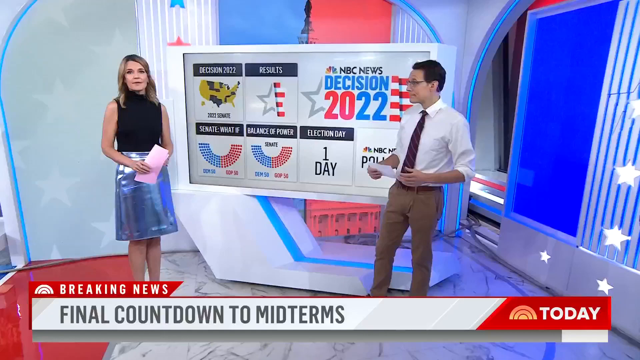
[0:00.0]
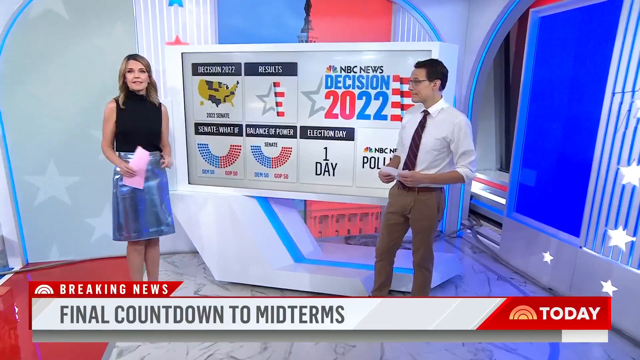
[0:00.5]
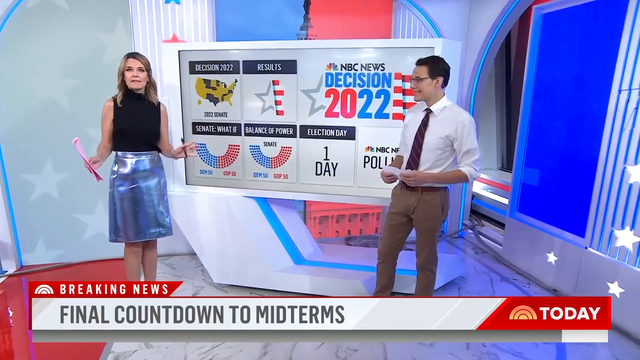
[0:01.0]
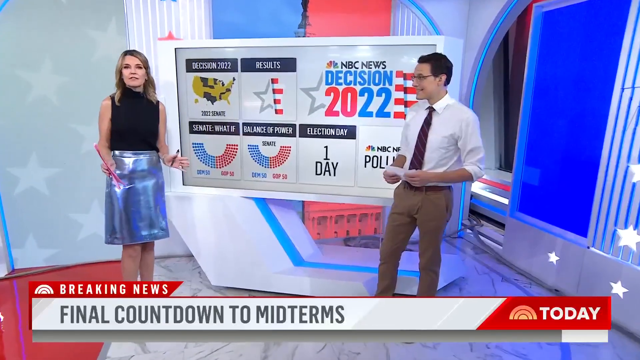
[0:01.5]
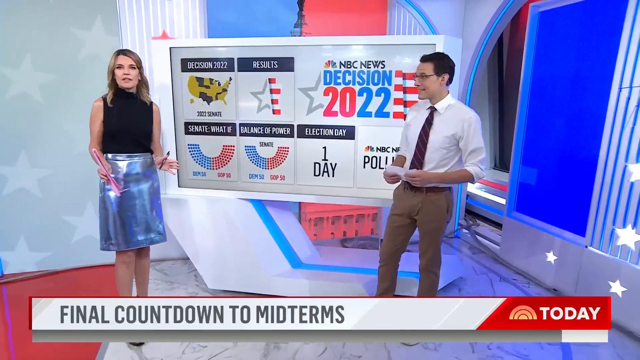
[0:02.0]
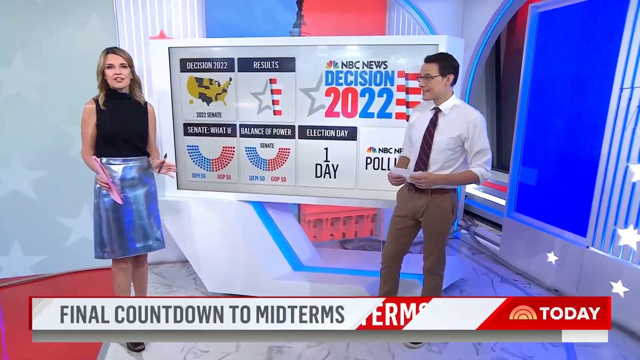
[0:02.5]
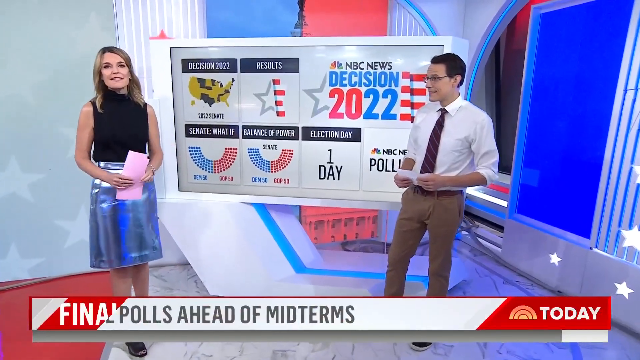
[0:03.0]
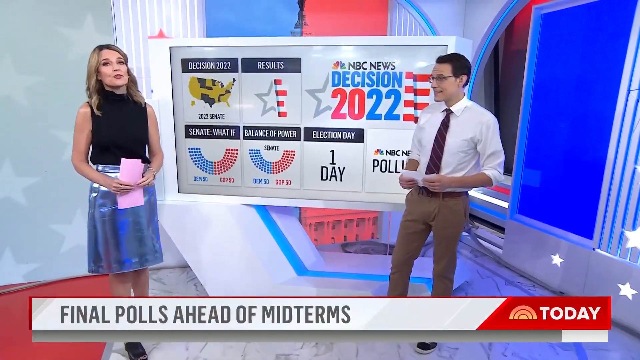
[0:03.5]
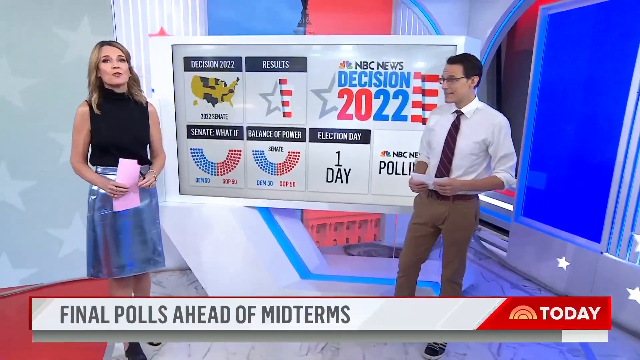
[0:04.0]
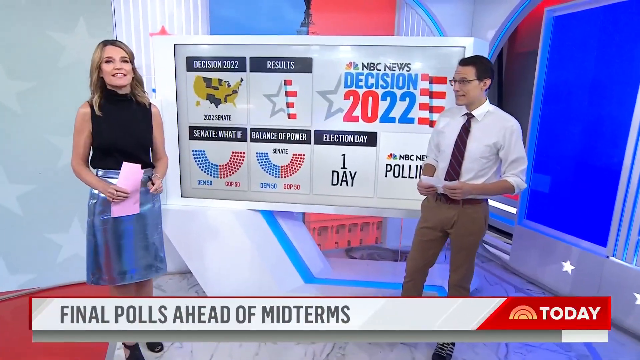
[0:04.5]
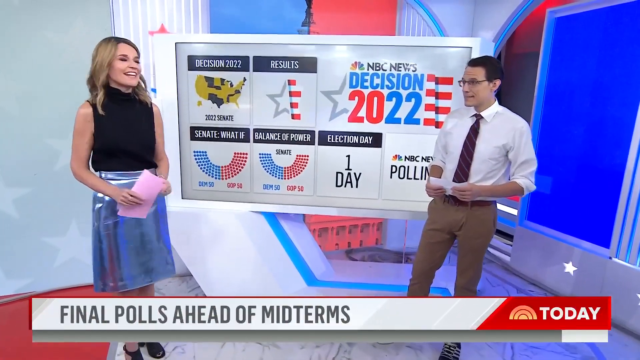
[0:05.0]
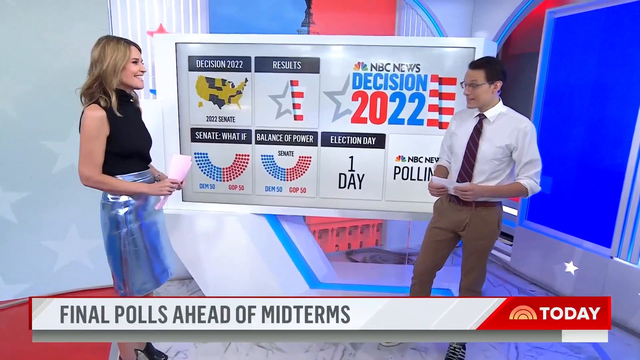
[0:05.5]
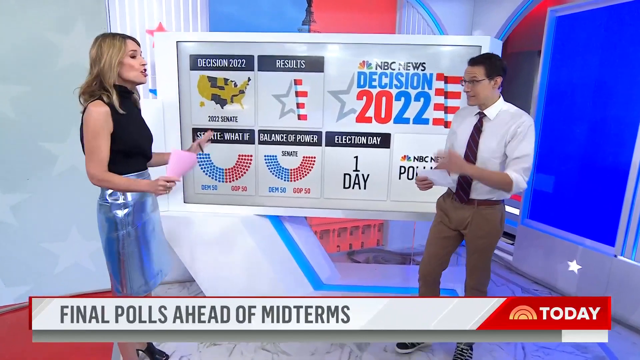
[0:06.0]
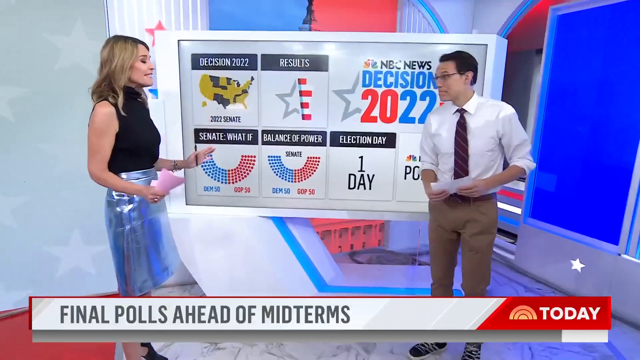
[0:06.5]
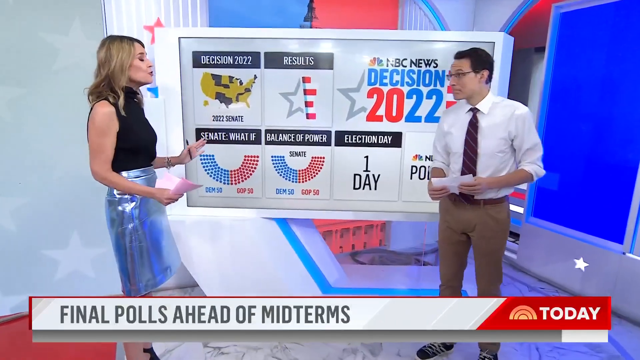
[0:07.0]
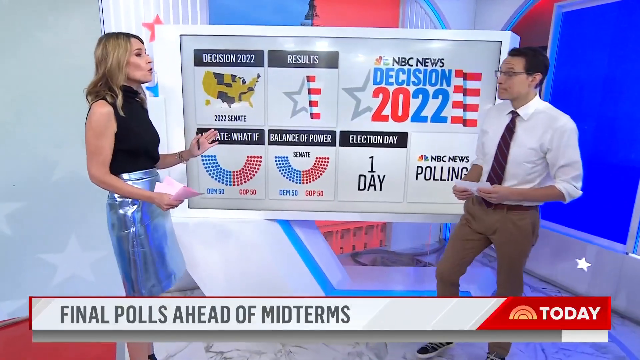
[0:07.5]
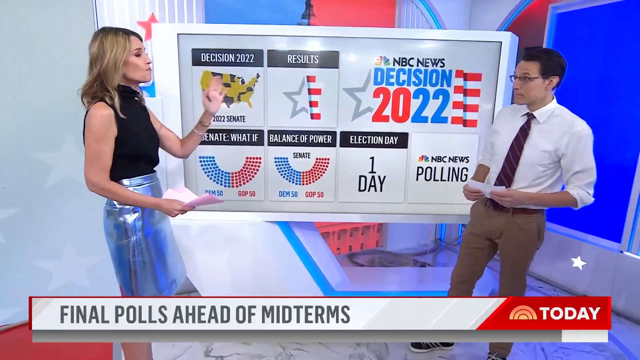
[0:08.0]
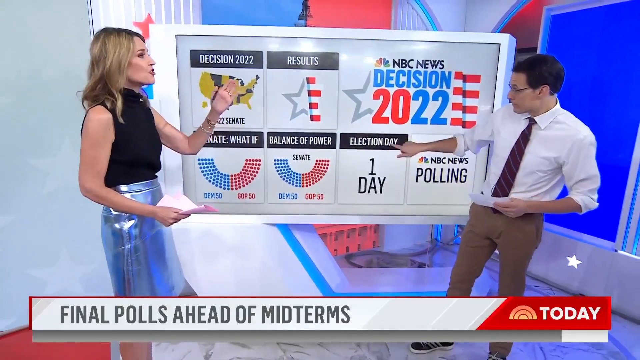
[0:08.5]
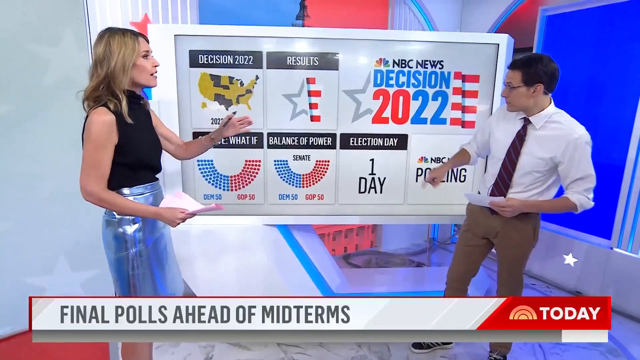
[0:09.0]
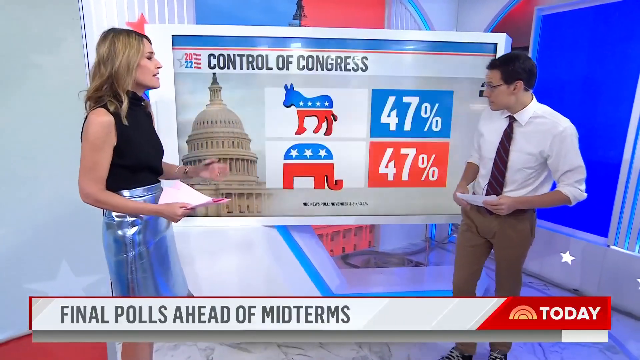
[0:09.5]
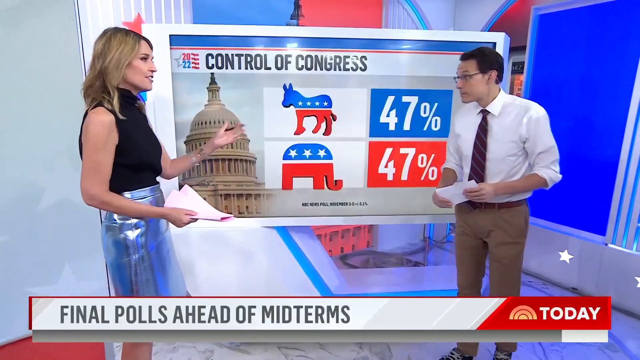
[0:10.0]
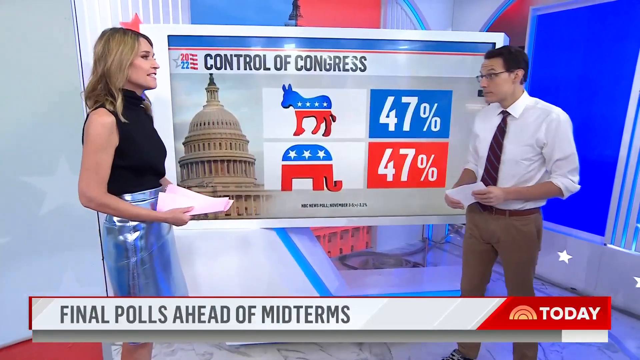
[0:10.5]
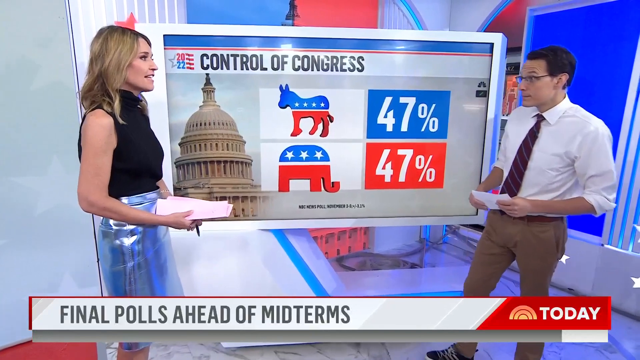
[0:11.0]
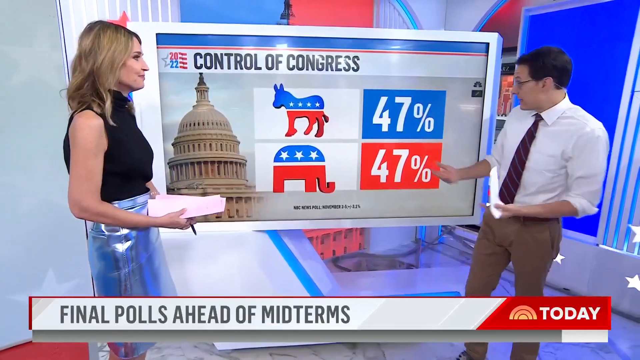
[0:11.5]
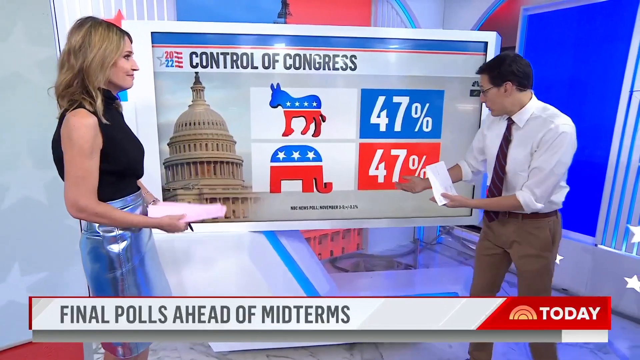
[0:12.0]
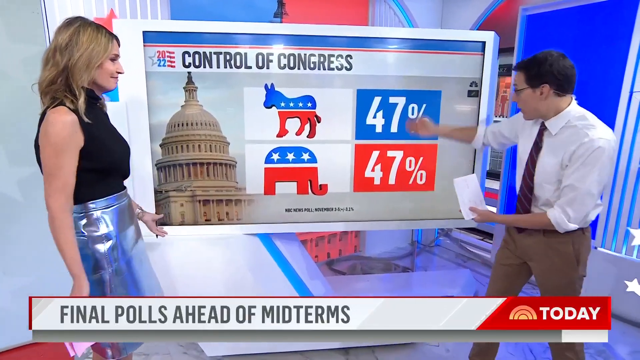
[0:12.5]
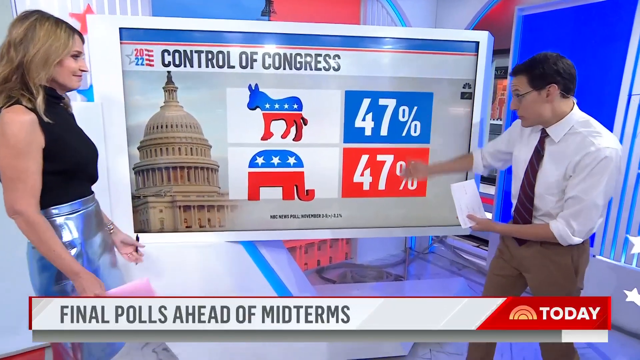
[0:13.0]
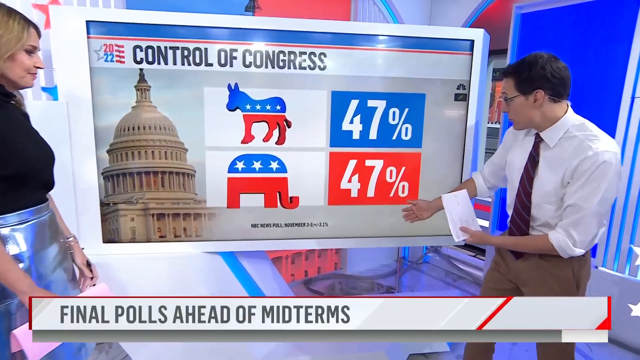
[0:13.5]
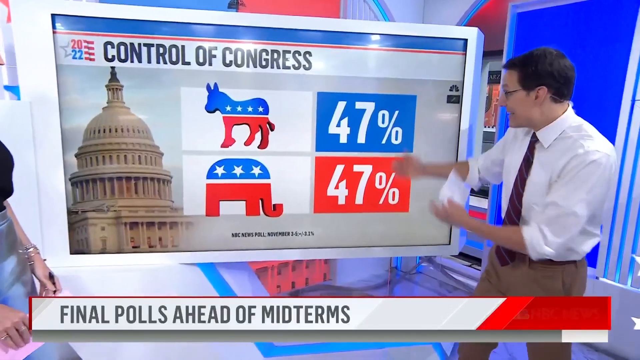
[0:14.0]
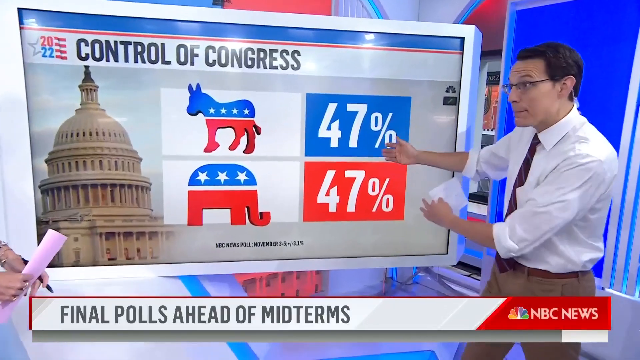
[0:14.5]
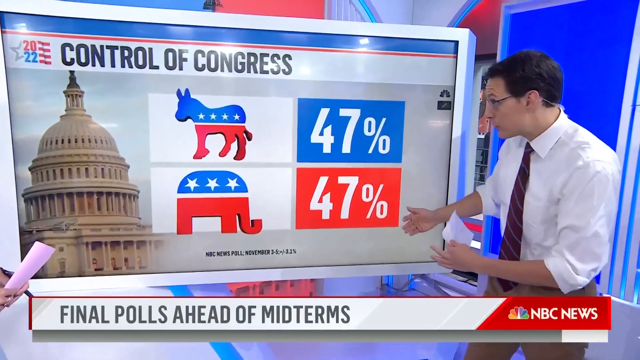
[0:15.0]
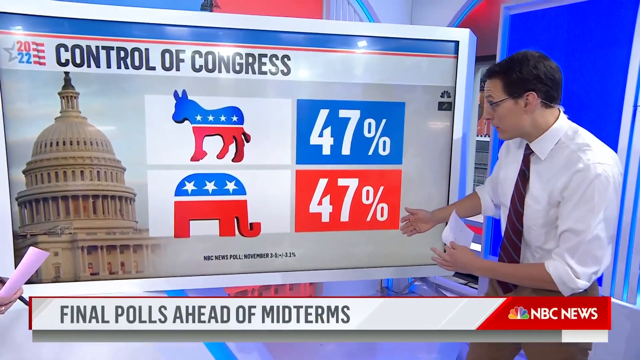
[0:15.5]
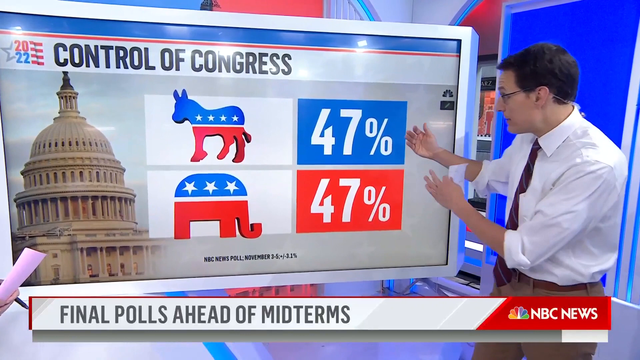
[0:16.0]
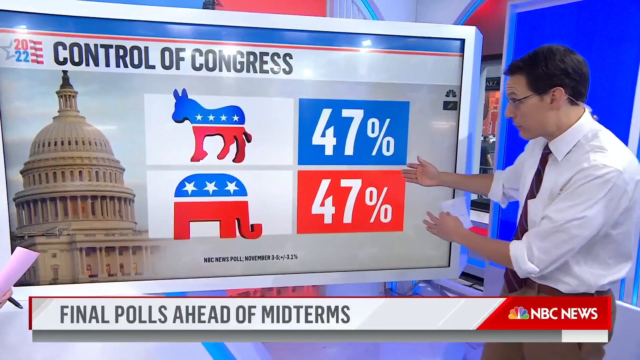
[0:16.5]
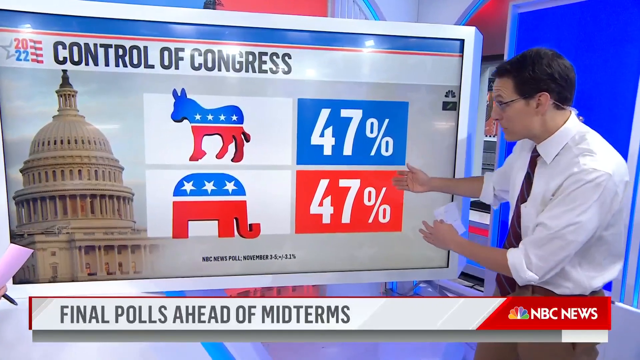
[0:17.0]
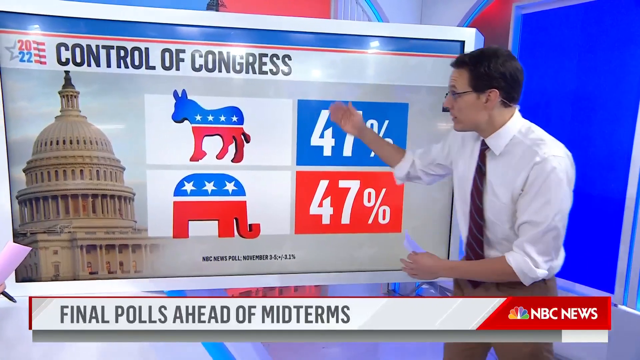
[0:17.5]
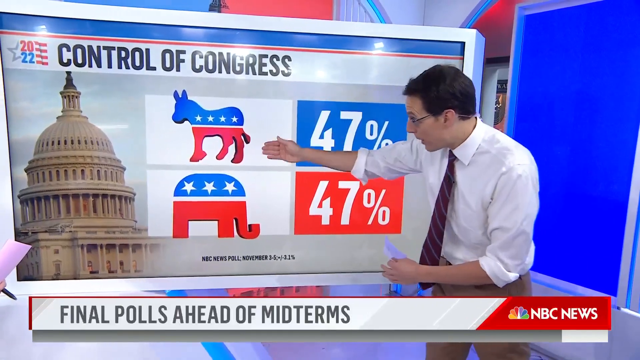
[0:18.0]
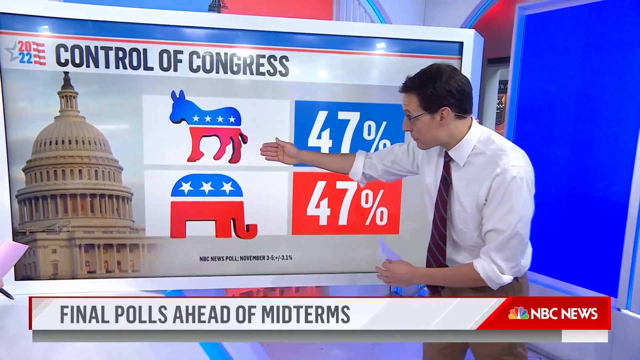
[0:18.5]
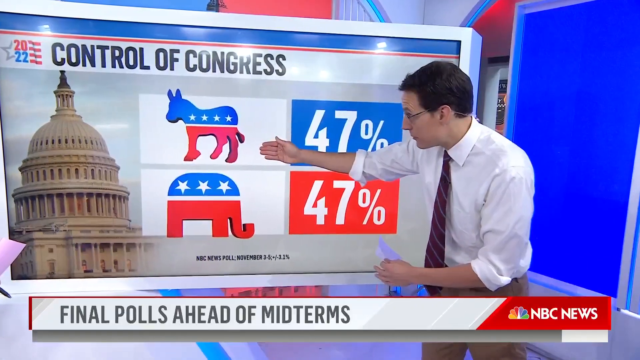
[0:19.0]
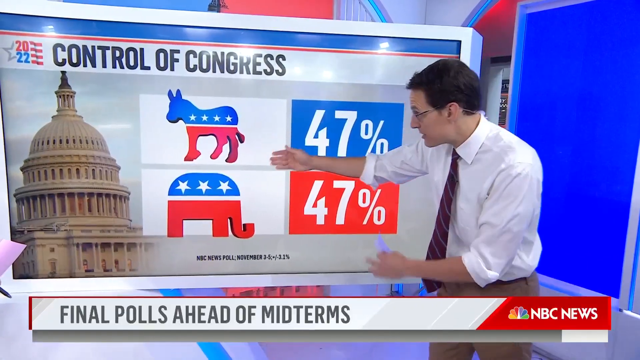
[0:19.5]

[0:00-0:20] A news program called The Today Show opens with on-screen text reading "breaking news, final countdown to the midterms," followed by "final polls ahead of the midterms." Two people stand in front of a screen: a woman in a silver skirt and a black shirt, and a man in a white shirt, tan pants and a tie. He points at a screen that says "NBC News decision 2022." Various infographics appear, including text reading "election day, day one." A screen reads "control of Congress," showing 47% for the Democrats and 47% for the Republicans. The colors are vibrant blues, whites and reds, and the video is high quality.